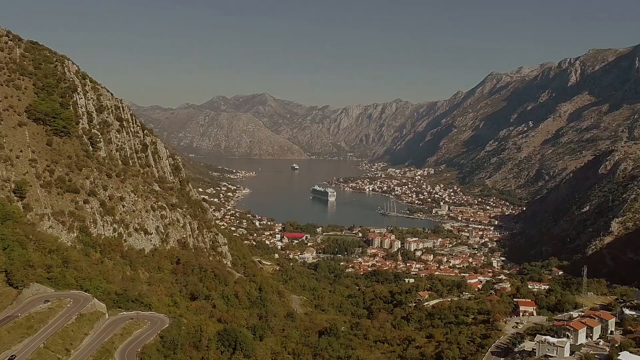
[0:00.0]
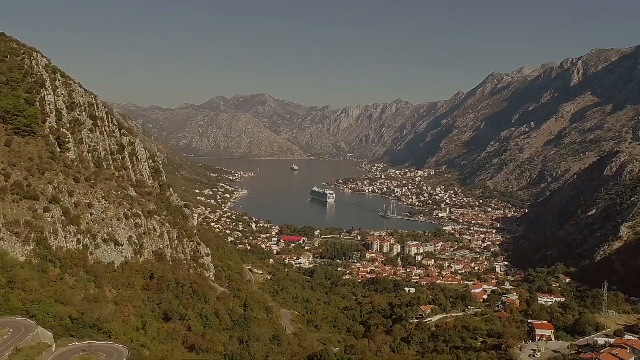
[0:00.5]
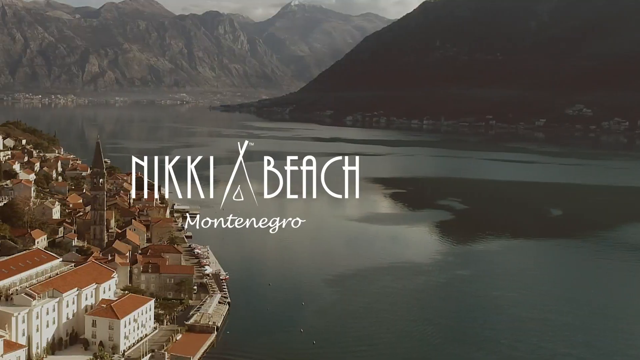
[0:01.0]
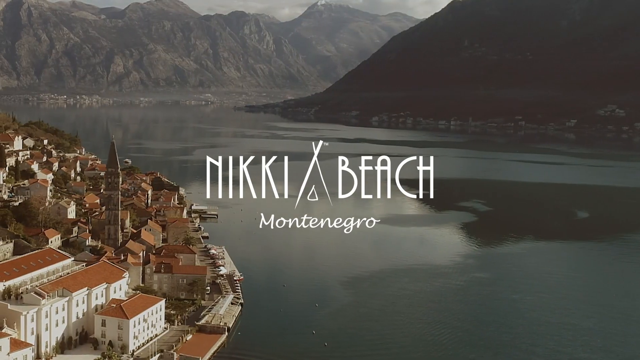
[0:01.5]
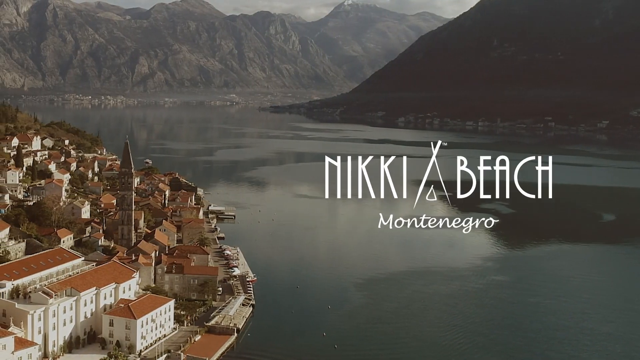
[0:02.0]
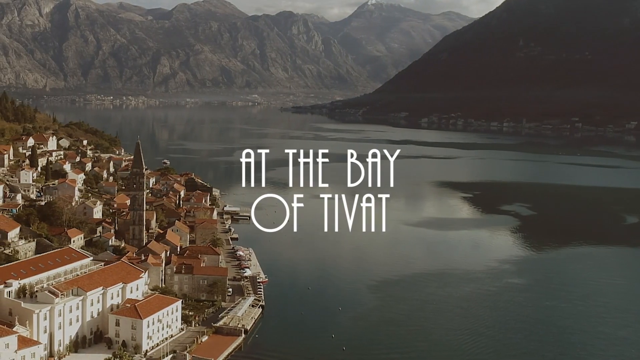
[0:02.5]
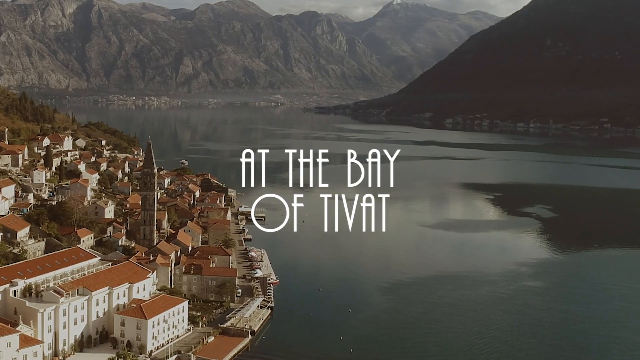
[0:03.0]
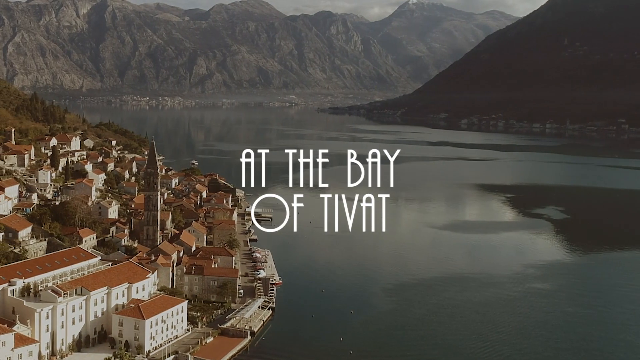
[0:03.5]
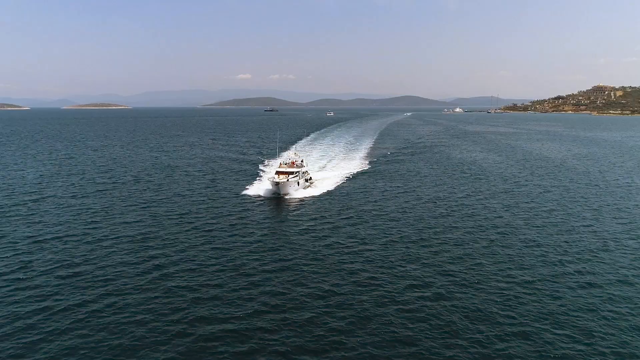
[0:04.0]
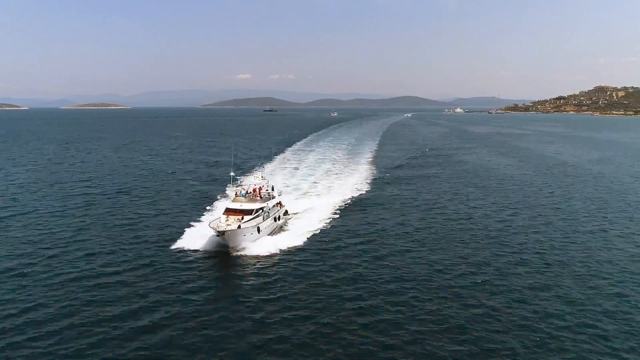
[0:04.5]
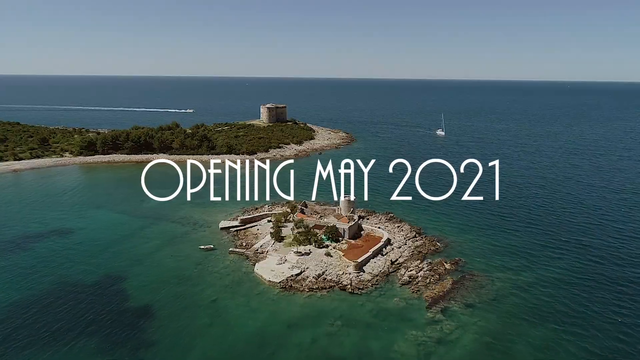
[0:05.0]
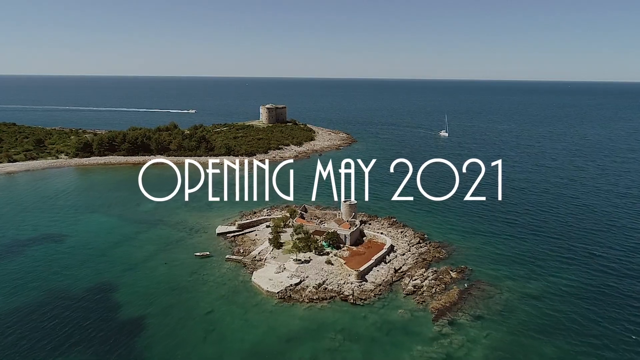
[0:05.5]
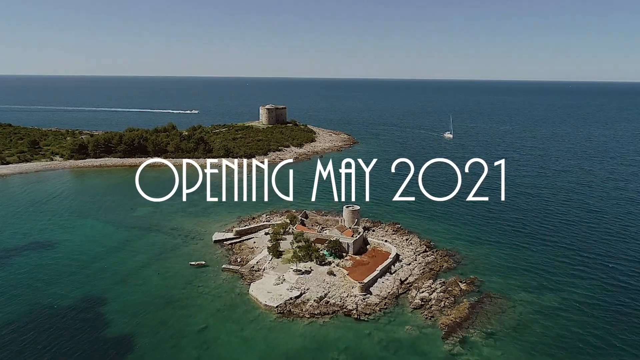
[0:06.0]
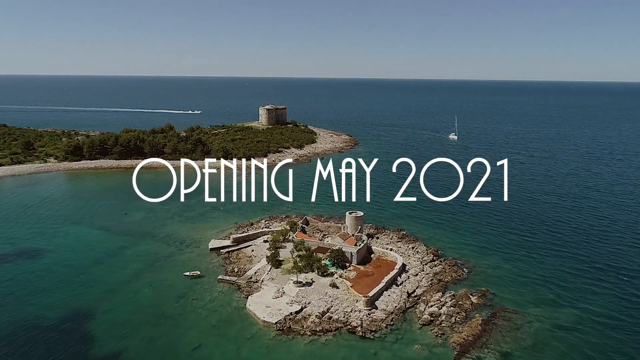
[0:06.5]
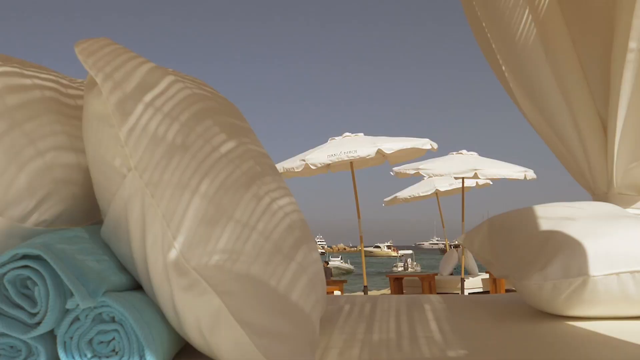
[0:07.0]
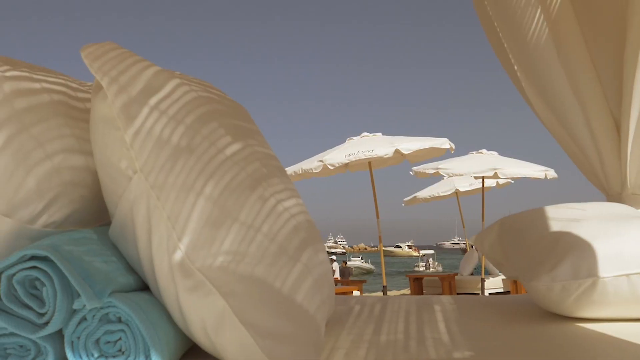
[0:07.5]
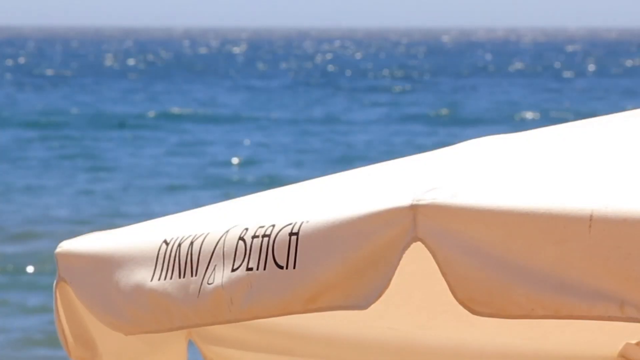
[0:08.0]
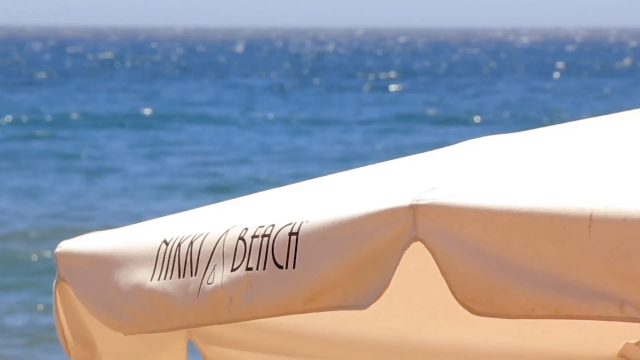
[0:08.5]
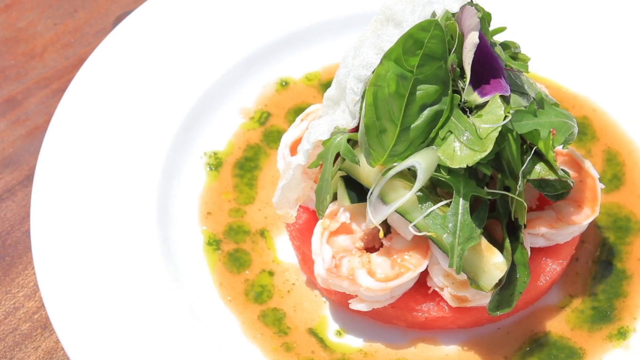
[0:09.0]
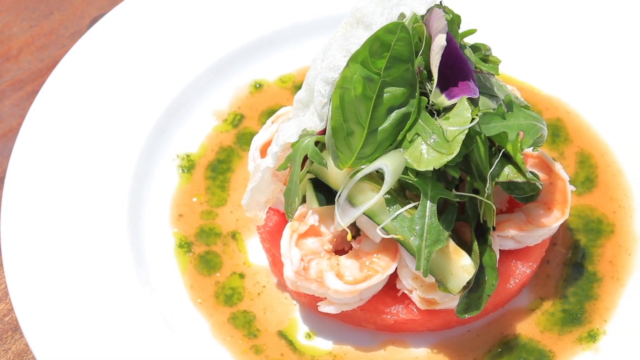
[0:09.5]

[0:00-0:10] A beach is shown, including a beach house area where people relax, with mountains around it. The place appears to be Nikki Beach at the Bay of Tabat, opening May 21, so this is possibly an ad for a new beach that is about to launch. The setting is surrounded by nature, with a lot of mountains around, and the water is clean and blue.